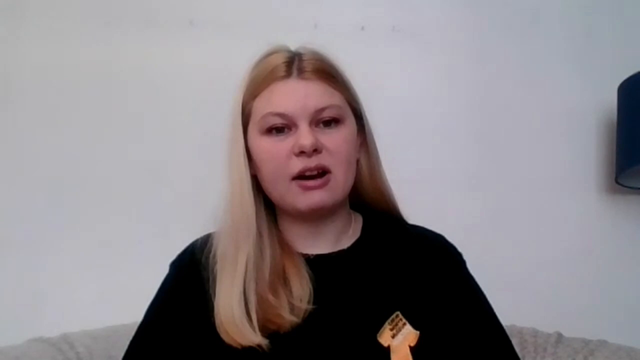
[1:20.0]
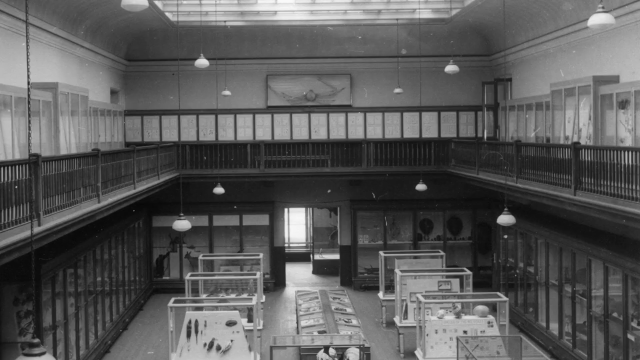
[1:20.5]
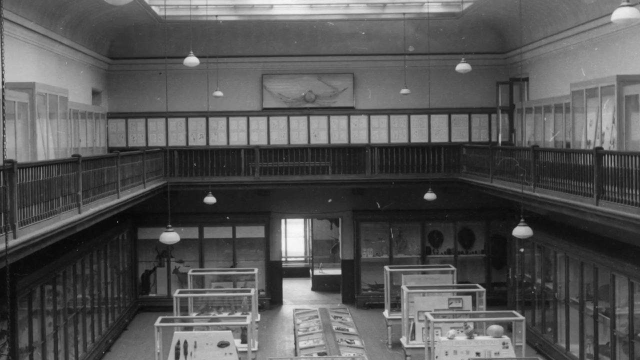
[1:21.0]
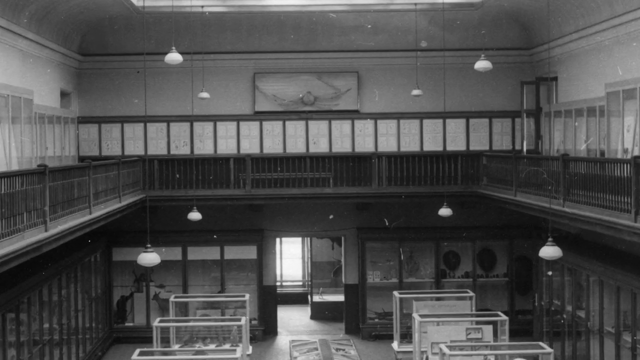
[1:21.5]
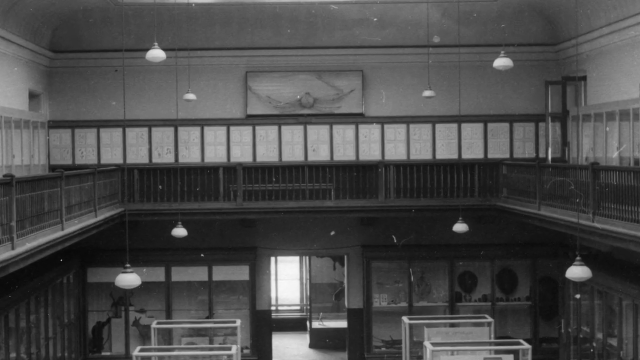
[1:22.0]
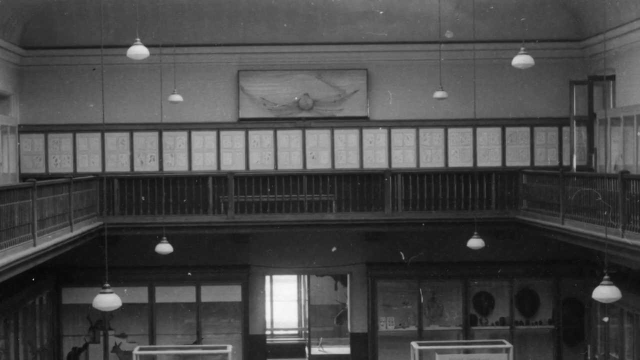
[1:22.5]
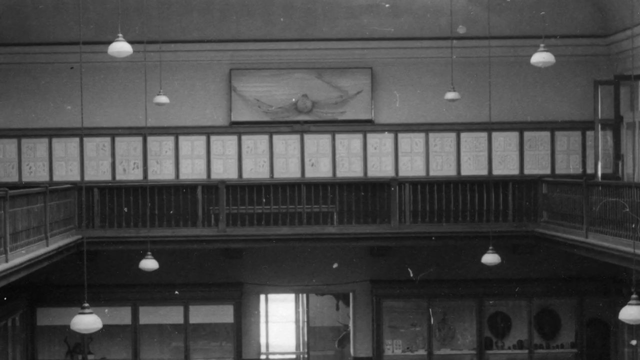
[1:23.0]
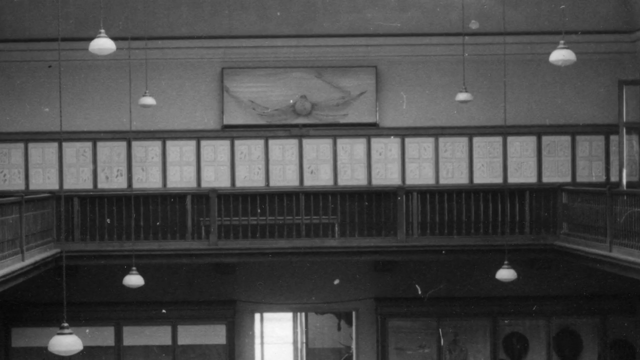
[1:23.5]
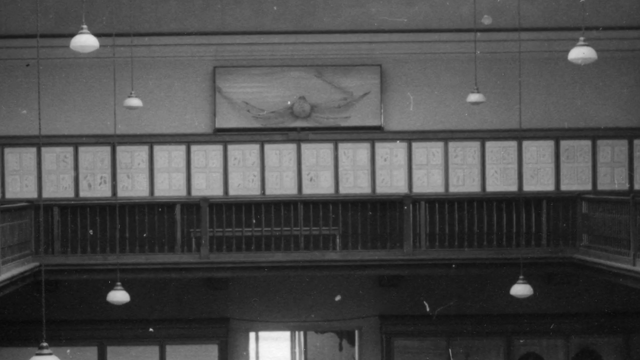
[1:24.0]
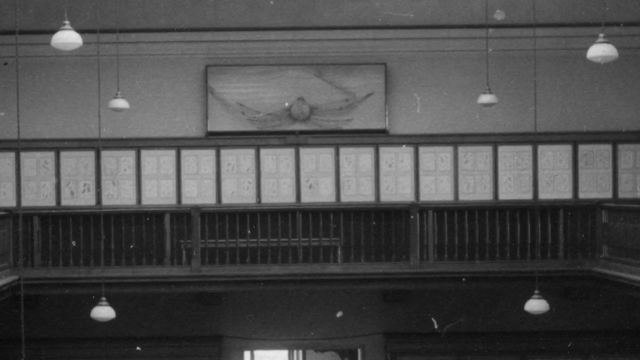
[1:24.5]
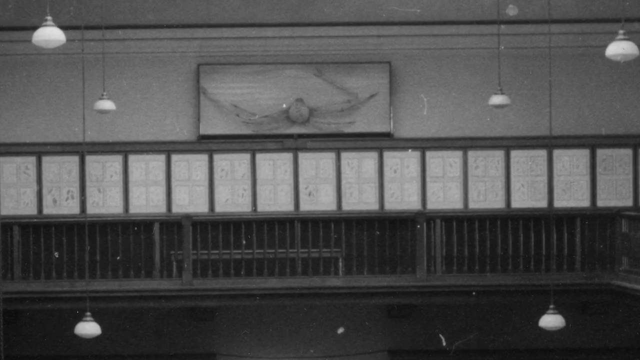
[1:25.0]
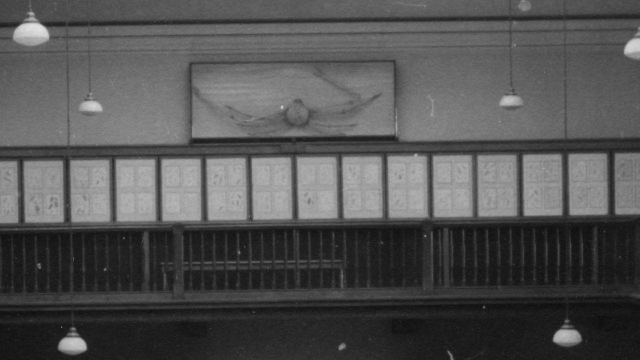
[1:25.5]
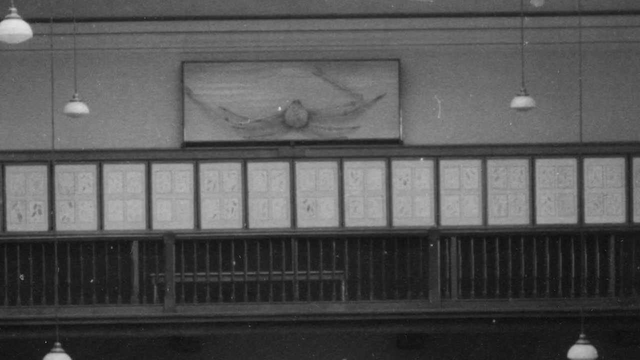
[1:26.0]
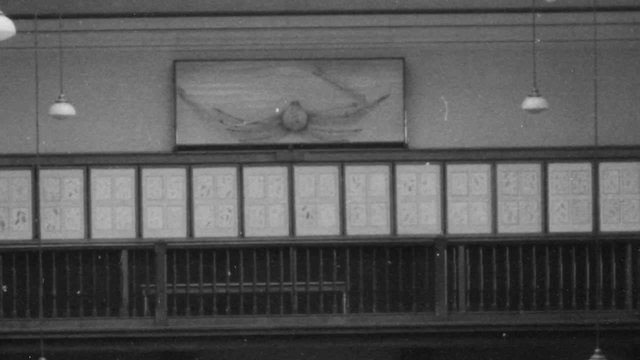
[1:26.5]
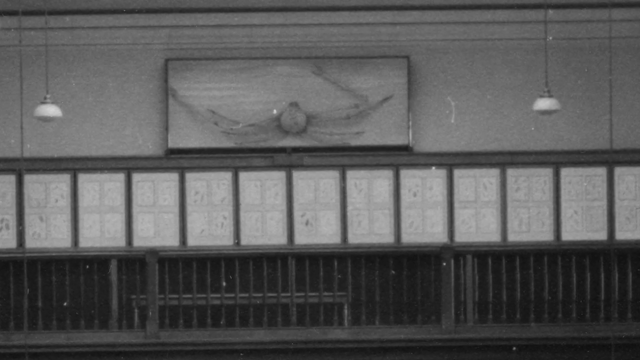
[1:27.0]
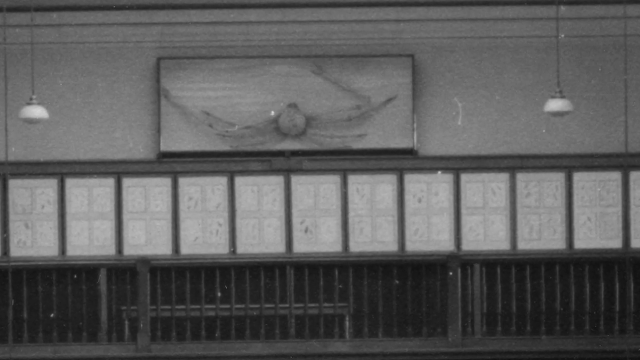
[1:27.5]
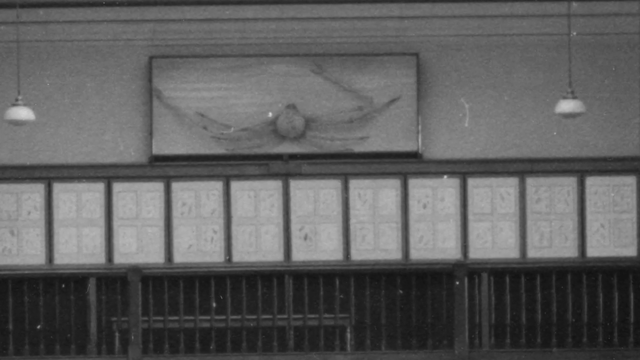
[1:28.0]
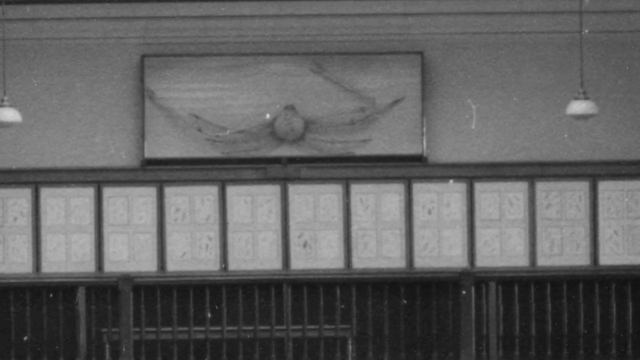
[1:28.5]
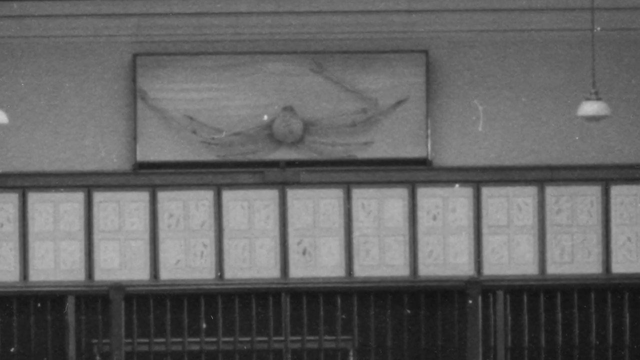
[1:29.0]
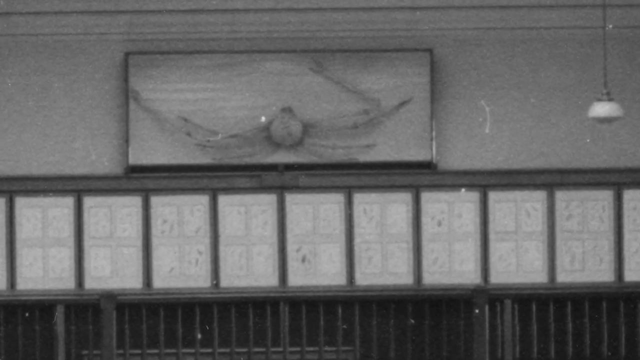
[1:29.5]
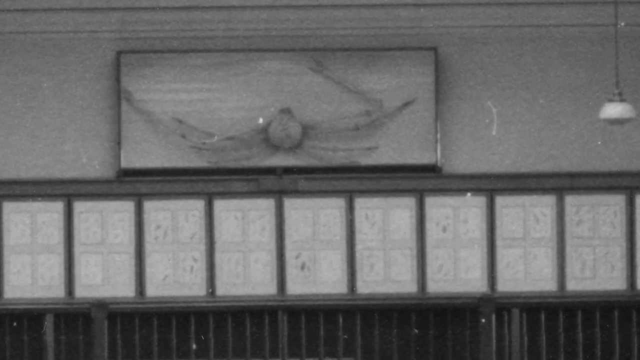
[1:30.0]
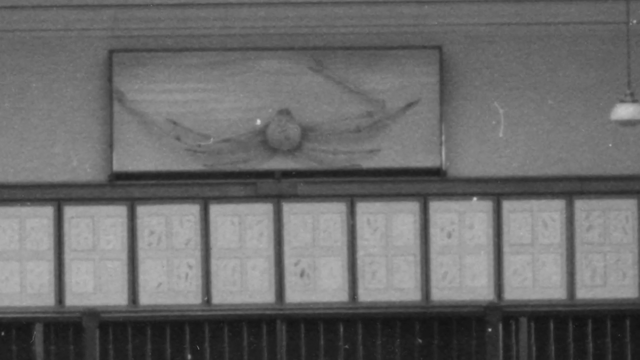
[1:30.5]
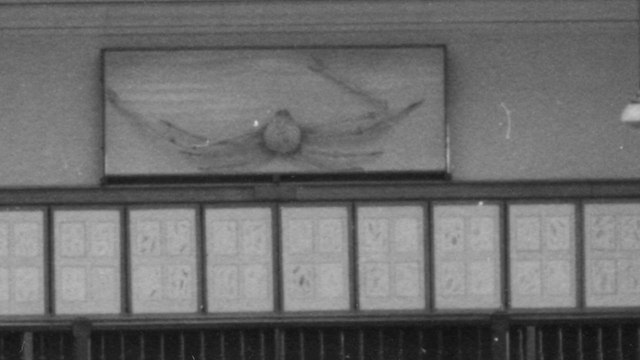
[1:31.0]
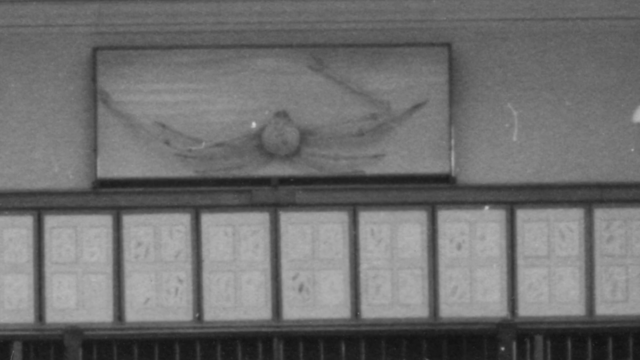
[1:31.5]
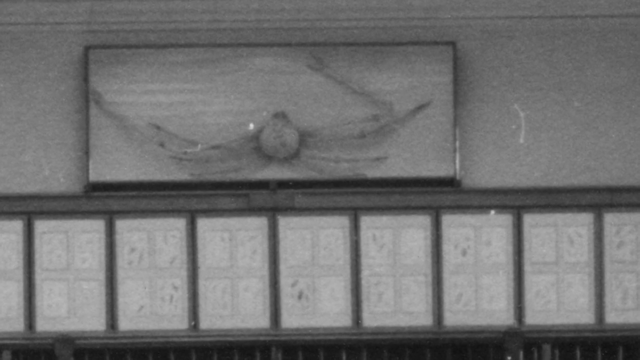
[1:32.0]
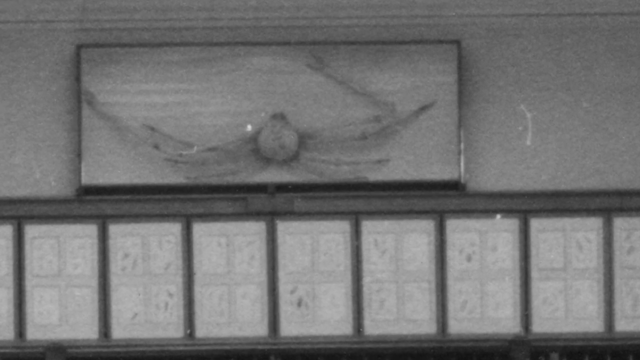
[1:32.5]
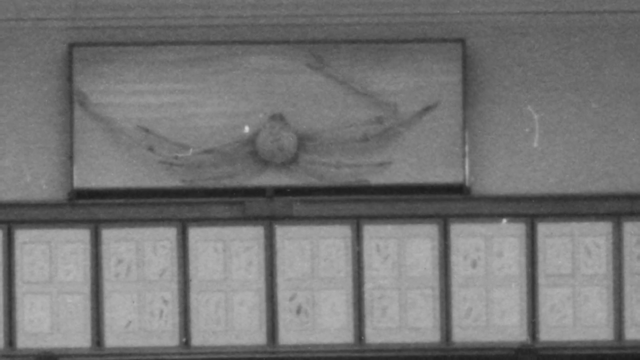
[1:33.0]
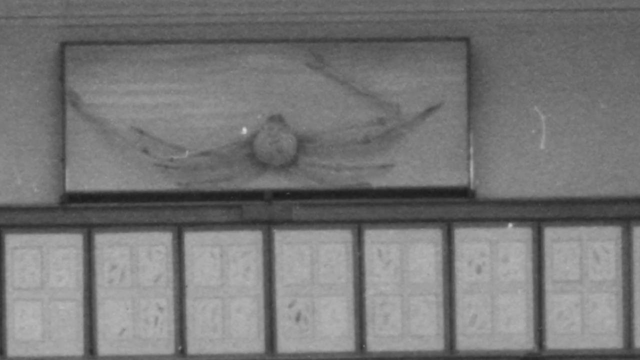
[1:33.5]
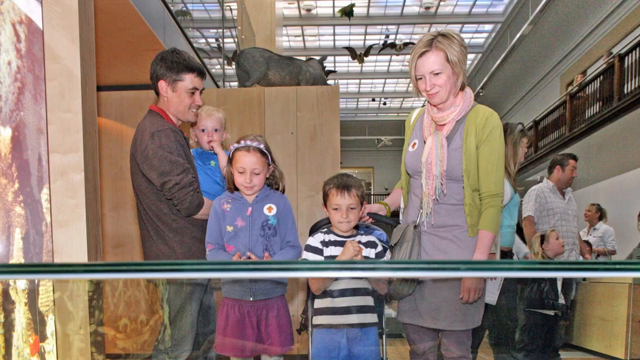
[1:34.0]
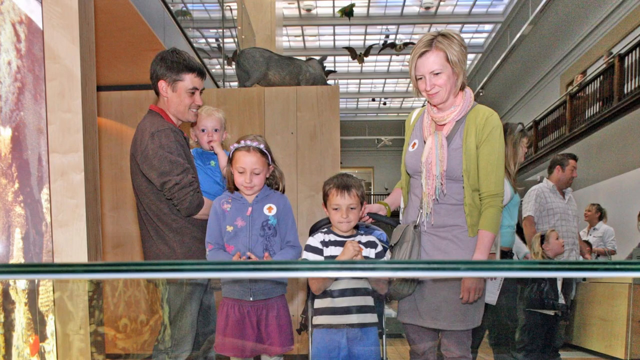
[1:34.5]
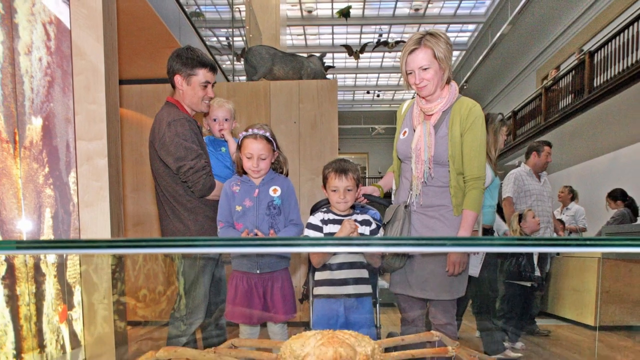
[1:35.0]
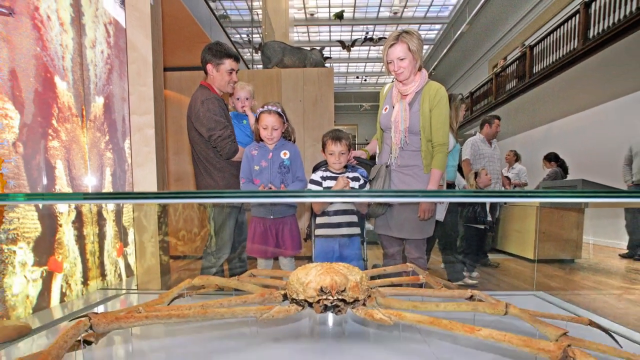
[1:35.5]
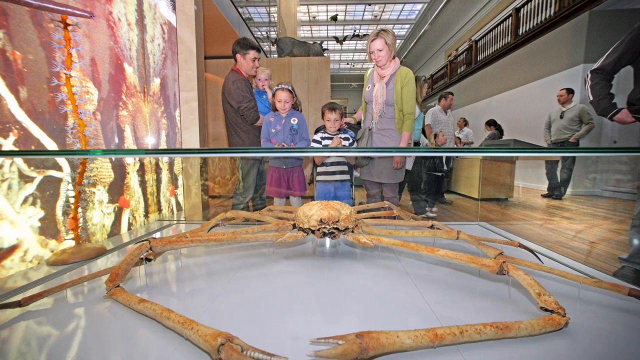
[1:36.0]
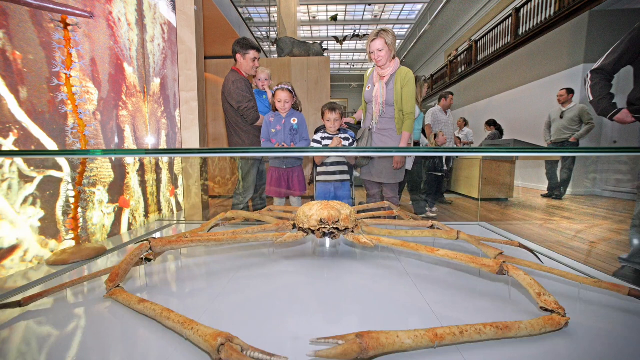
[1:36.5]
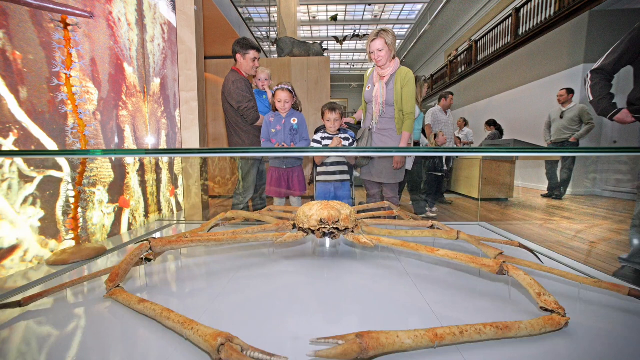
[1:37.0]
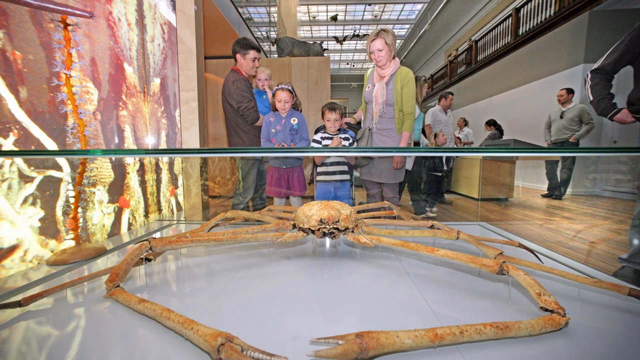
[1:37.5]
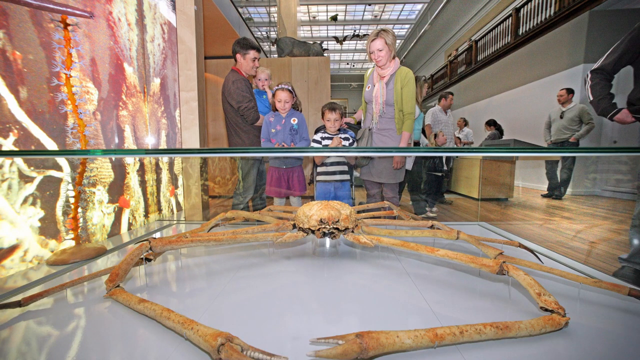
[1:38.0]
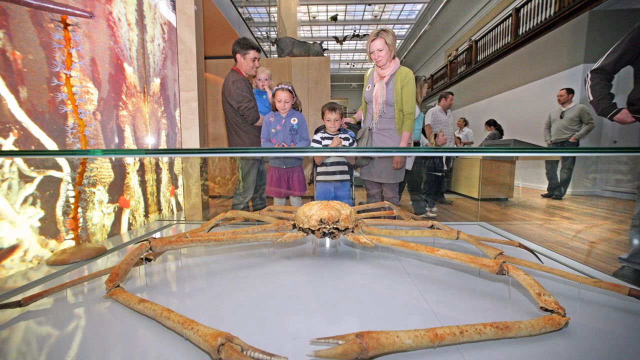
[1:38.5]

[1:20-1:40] After the woman talks, a very old black-and-white photo shows an interior with two levels and an open middle, long lights hanging down from the ceiling as well as short lights, and walkways on the second floor. There appears to be a drawn picture of the crab, and the camera zooms into it. Zooming out, the next picture shows a man with dark hair holding a baby; he wears a brown sweater top with what looks like an orange undershirt, and the baby wears a blue outfit. Seen from the side of the case, the monster crab is clearly very big. A little girl in a skirt and sweater, a boy in a striped shirt, and what looks like a mom in a skirt and scarf are there. Other people are in the background of the museum, and the ceiling has windows that let sunlight through.